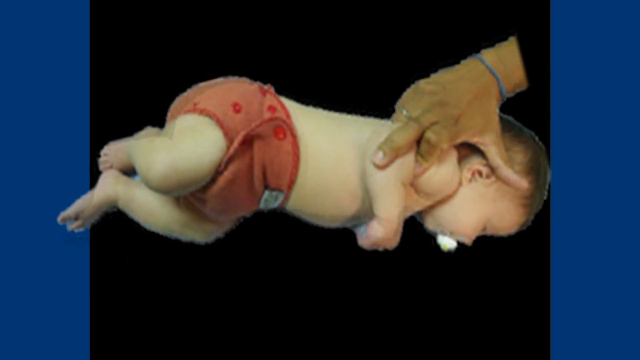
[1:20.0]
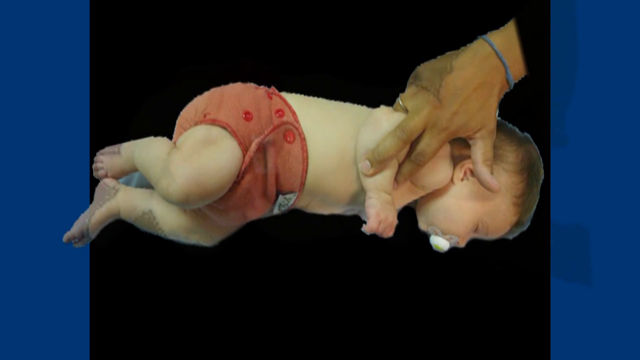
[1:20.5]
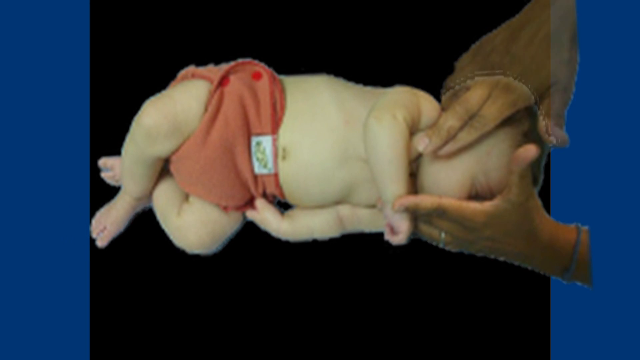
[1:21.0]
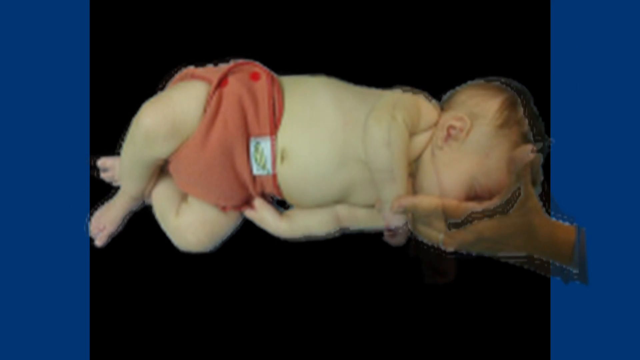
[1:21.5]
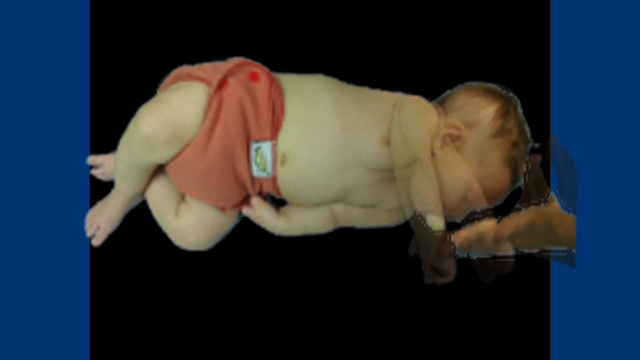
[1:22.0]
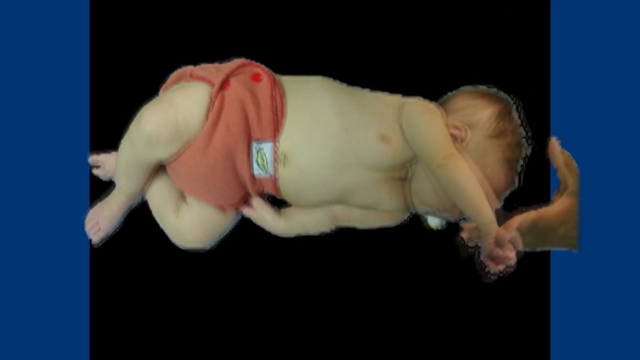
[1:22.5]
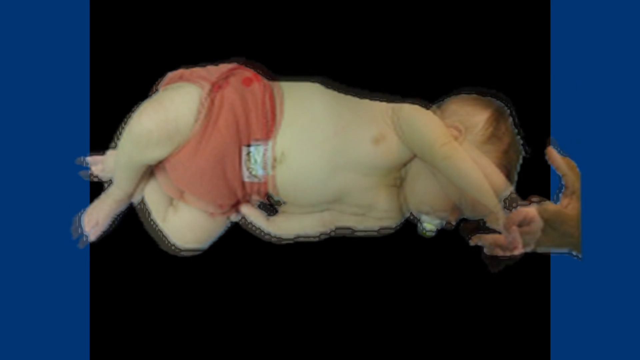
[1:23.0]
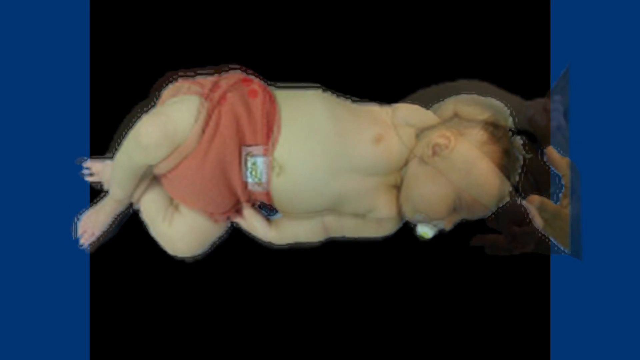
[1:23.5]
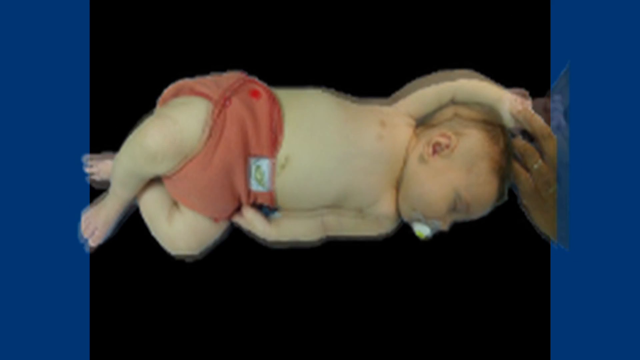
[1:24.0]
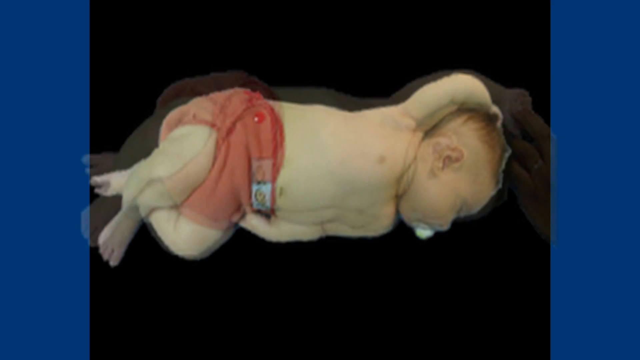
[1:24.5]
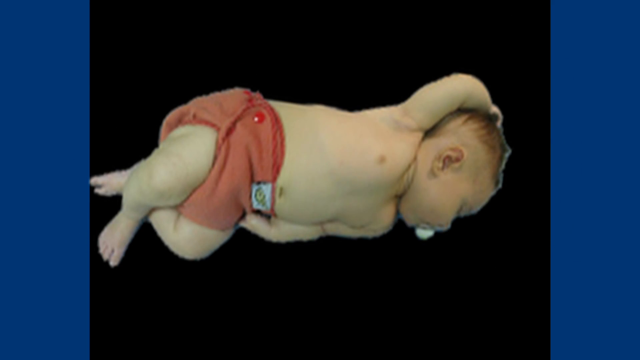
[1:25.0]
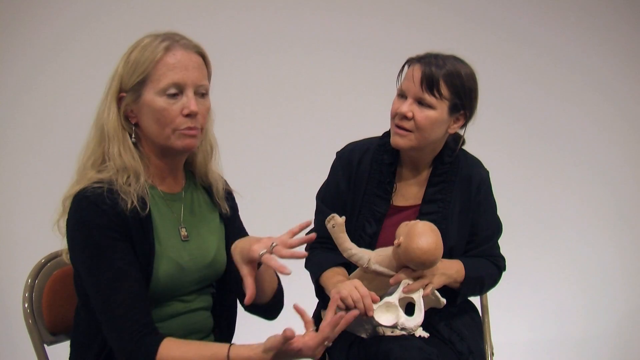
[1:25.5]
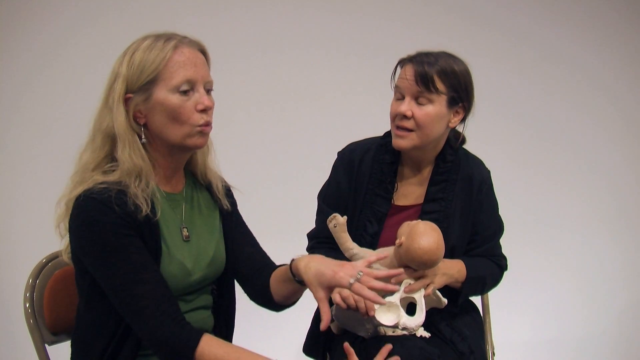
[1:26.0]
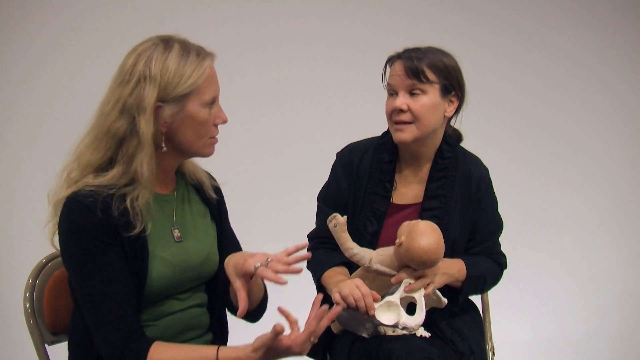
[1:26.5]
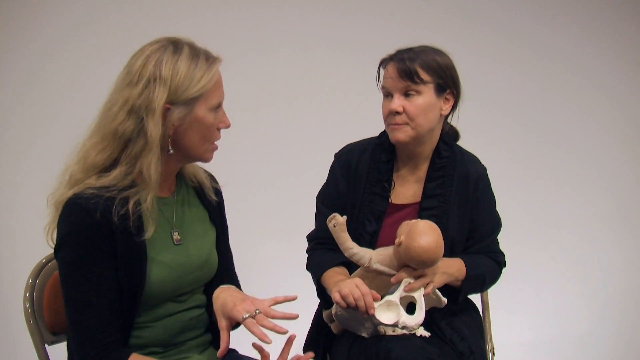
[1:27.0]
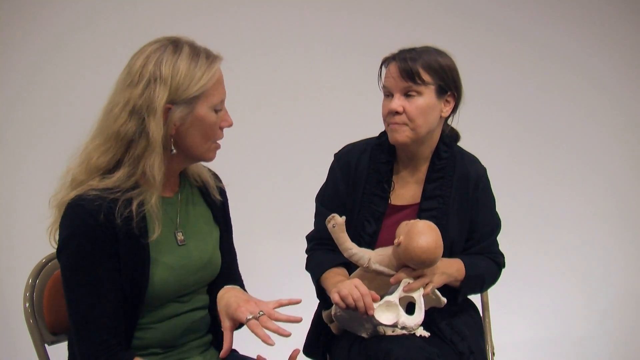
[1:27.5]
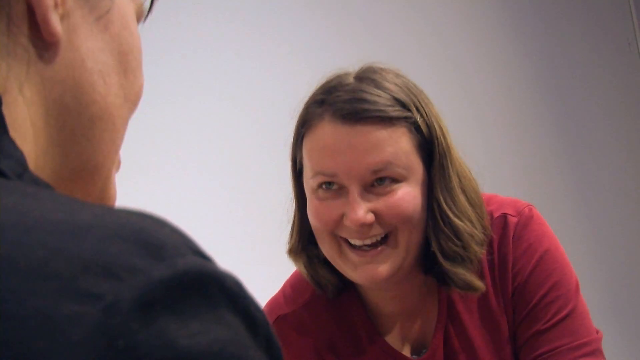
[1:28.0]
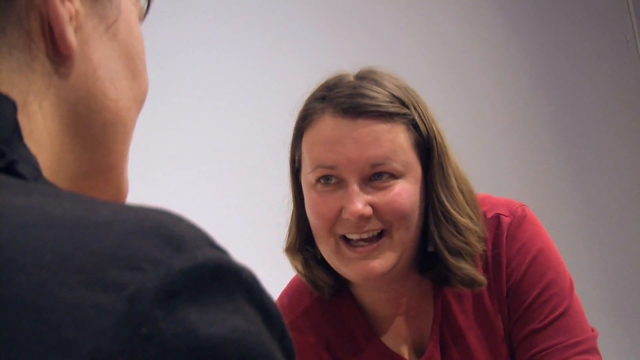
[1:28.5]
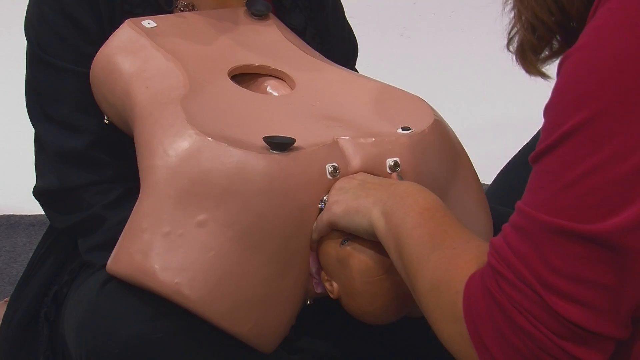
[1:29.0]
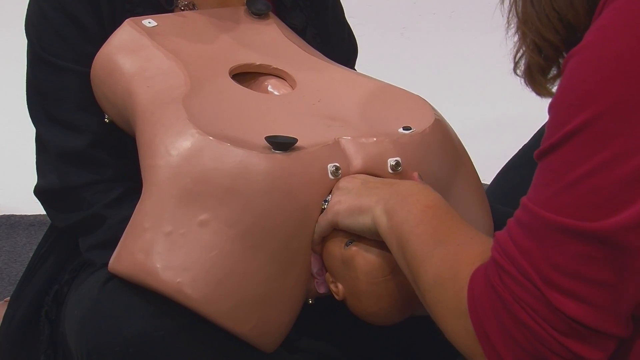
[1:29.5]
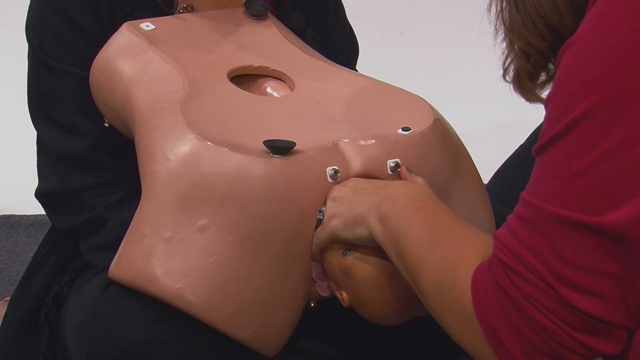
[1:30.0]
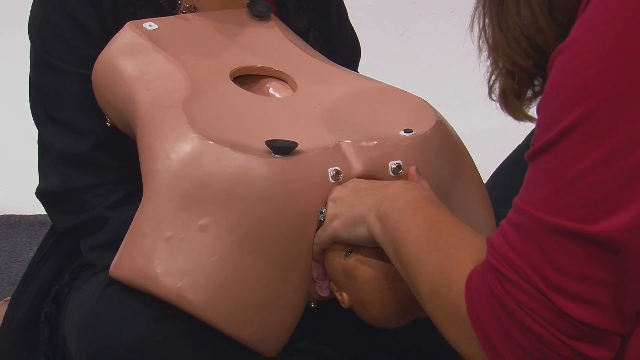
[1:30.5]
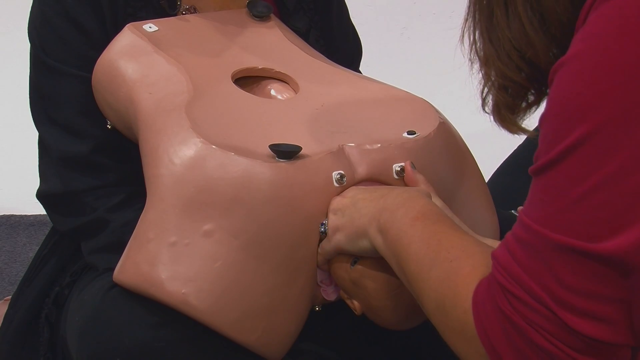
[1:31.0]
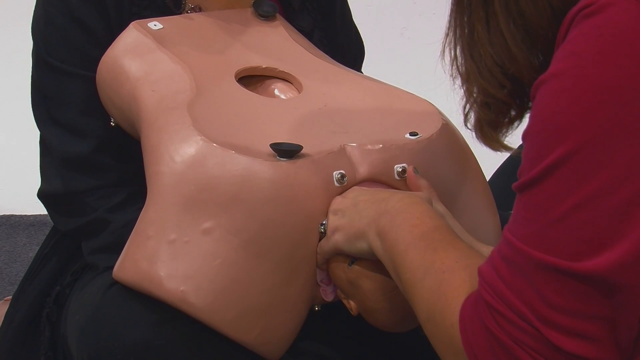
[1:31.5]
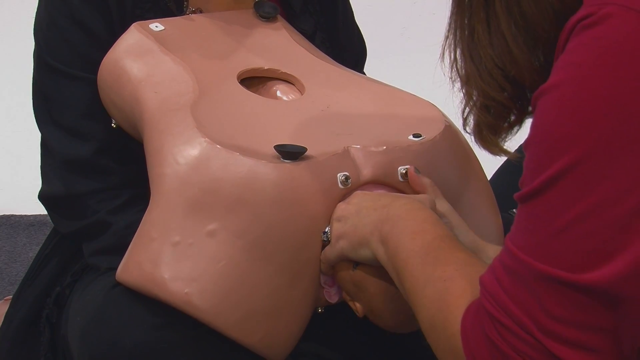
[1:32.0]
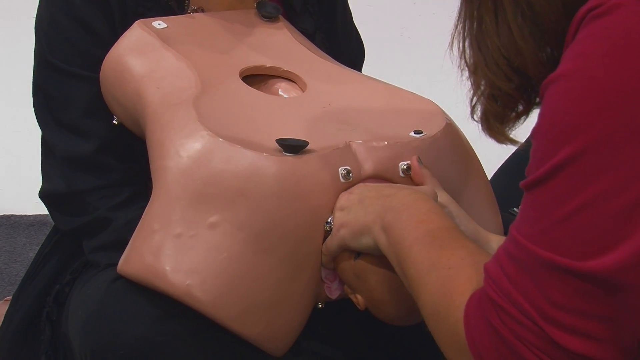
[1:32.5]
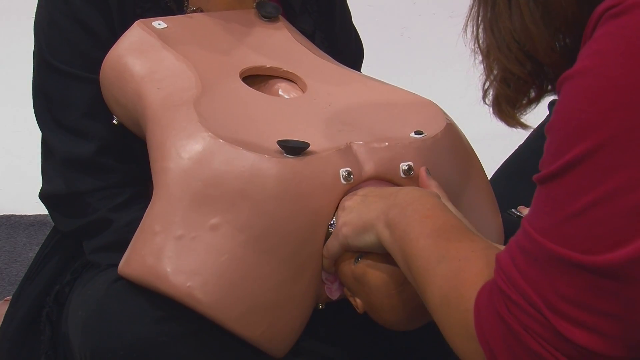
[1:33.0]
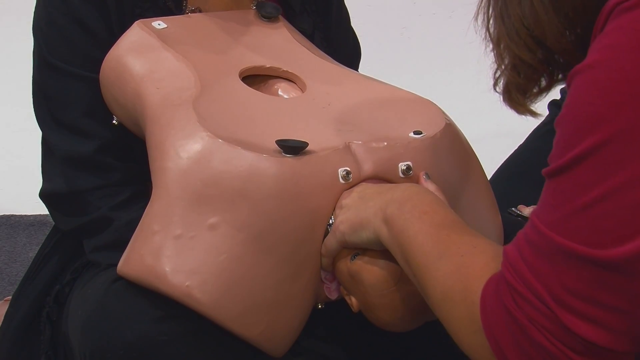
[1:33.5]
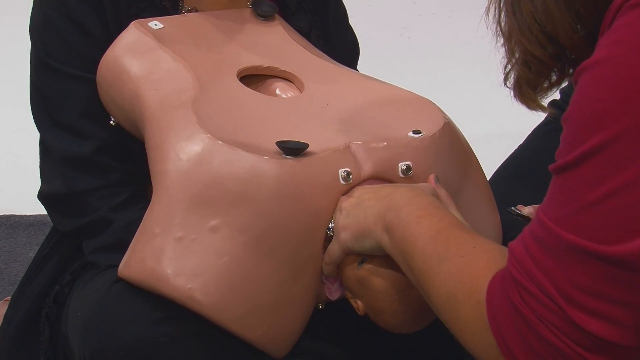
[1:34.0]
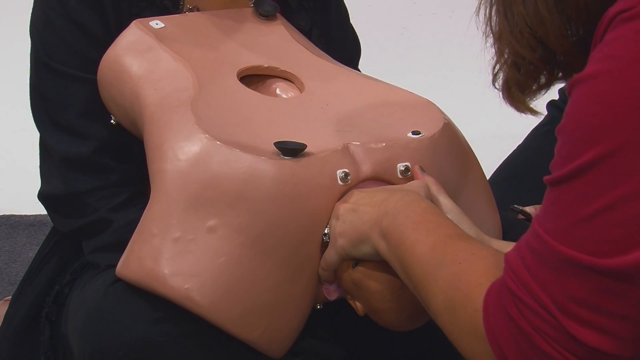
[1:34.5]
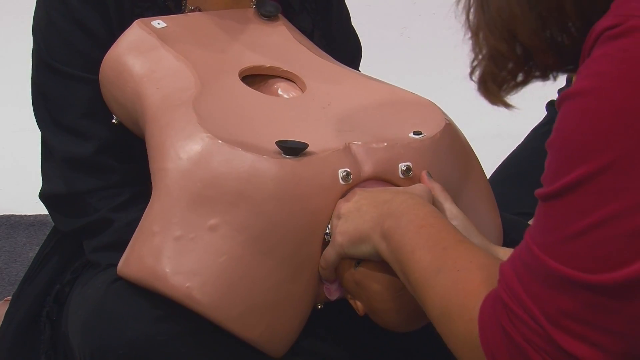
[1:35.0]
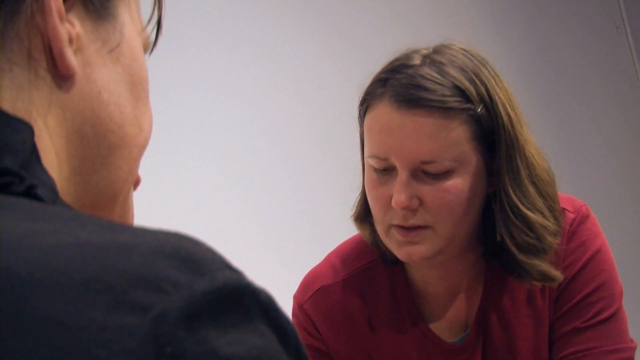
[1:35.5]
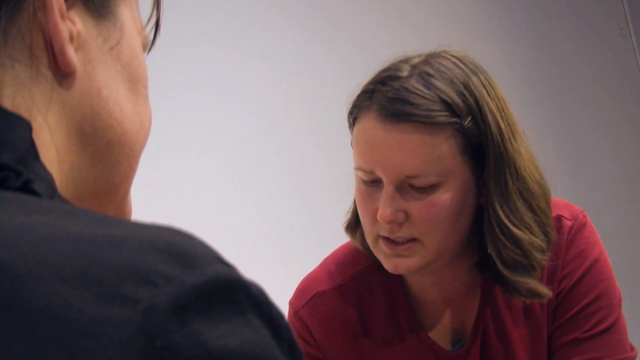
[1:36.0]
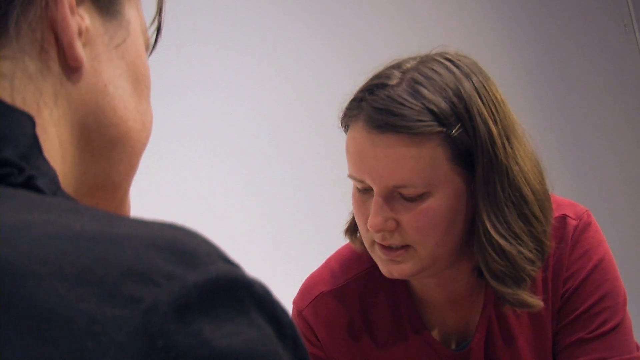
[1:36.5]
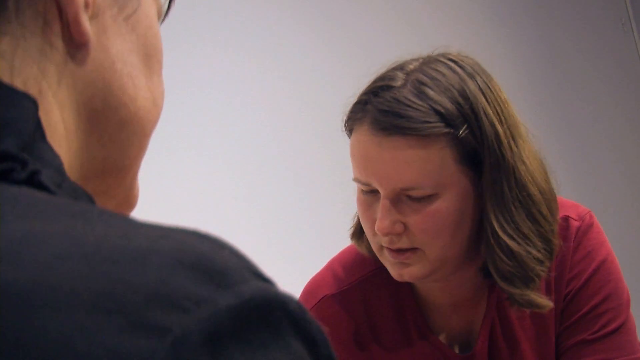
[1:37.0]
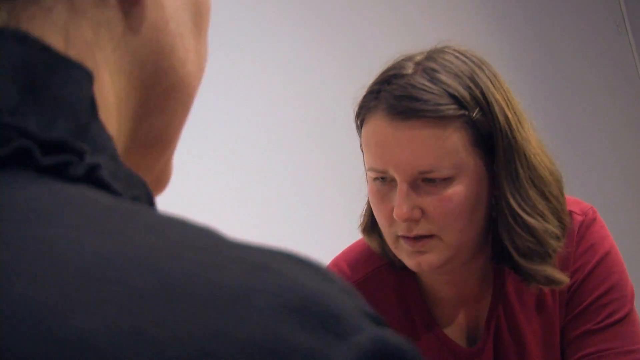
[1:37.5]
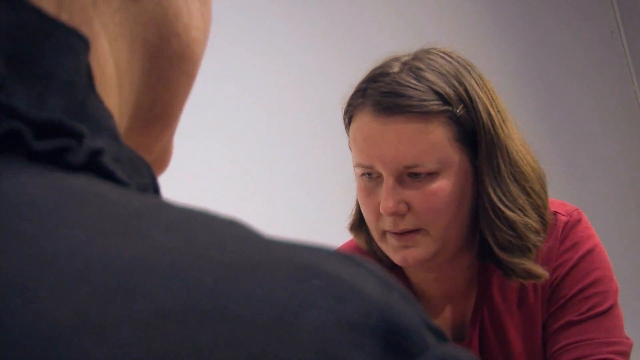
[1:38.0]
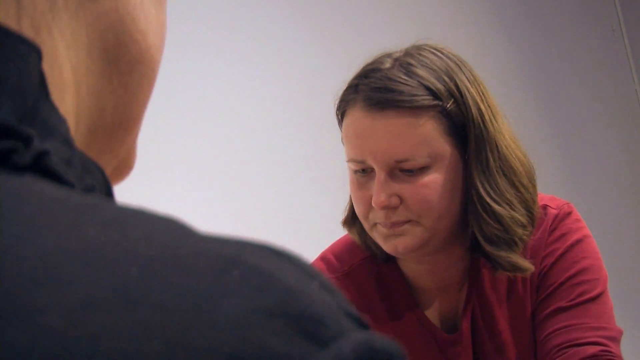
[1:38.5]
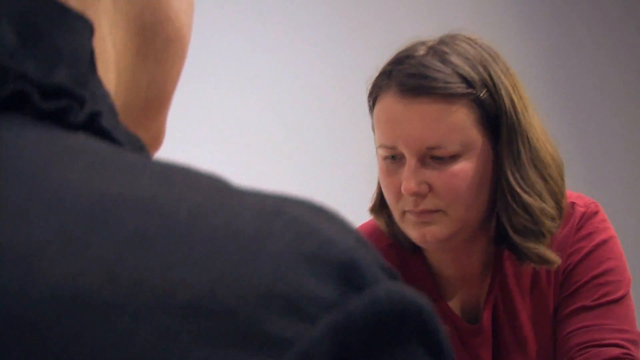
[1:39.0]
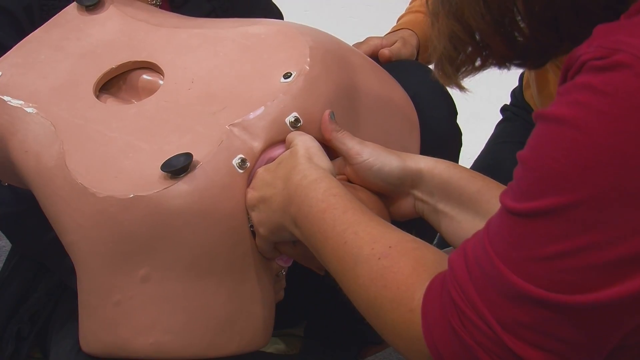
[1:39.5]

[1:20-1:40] The demonstration of posterior arm removal for a stuck baby continues. It is slowed down, almost presented as a freeze frame for each step: the hand moves underneath the baby's arm, and each movement is slowed almost to a still image so every part of the process can be seen, until the baby's arm is eventually lifted up by its head. The video returns to Gail and the group of women, who move on to a practical assessment. There is a dummy pelvis, much more lifelike than the earlier one, with a baby's head that has crowned and is being delivered out of the training vulva. A woman with brown hair wearing a maroon top has her hands over the delivered baby's face, with her fingers moving up into the vagina, demonstrating how to carefully move the baby and feel for the baby's posterior shoulder.